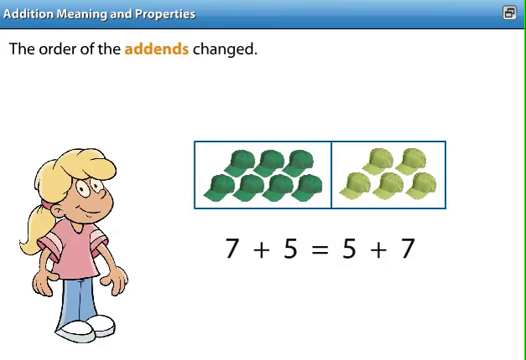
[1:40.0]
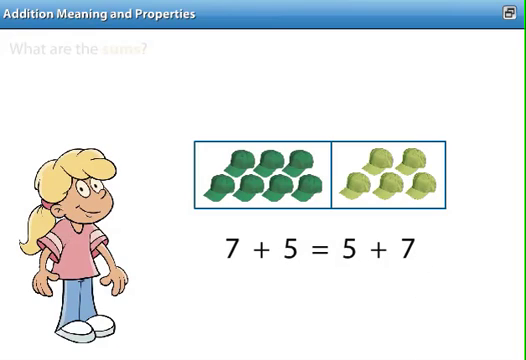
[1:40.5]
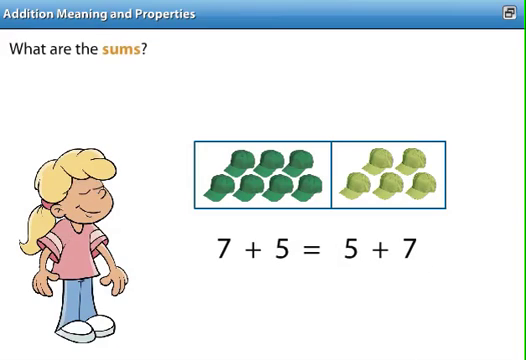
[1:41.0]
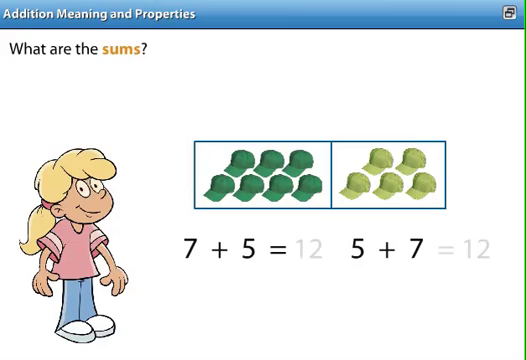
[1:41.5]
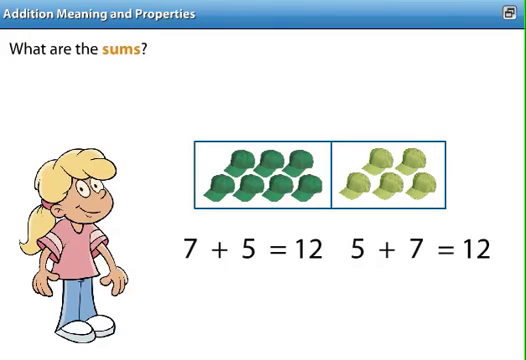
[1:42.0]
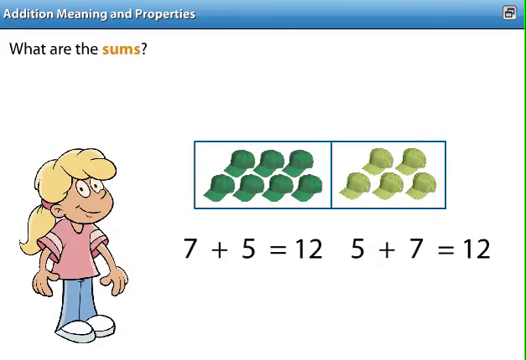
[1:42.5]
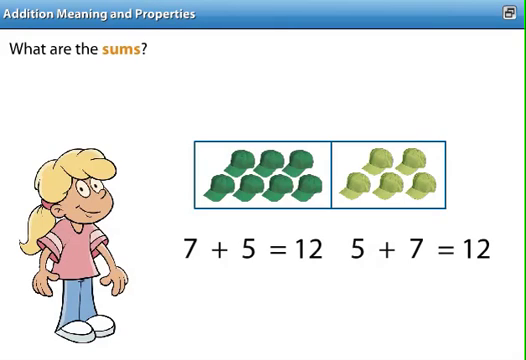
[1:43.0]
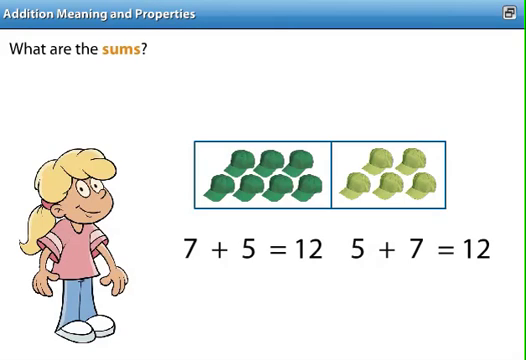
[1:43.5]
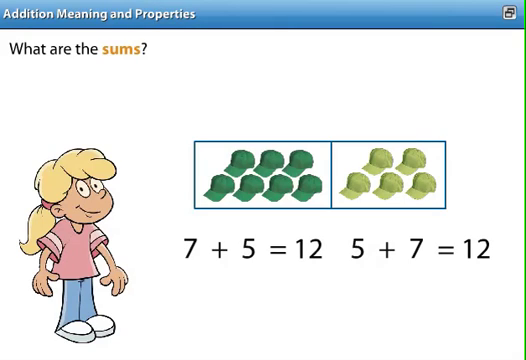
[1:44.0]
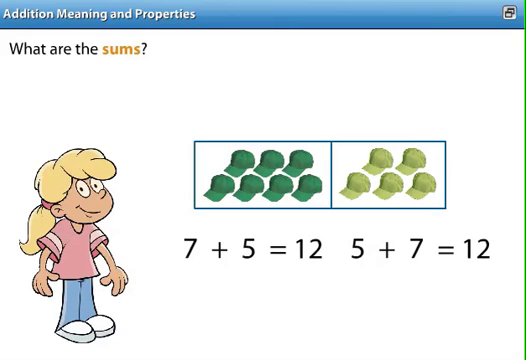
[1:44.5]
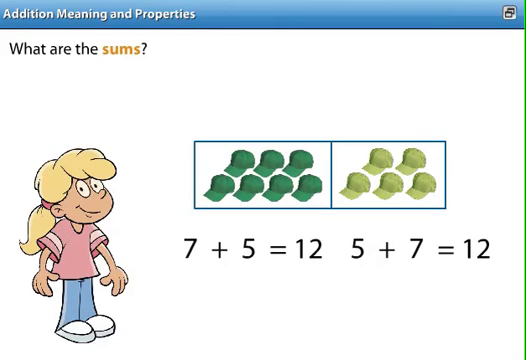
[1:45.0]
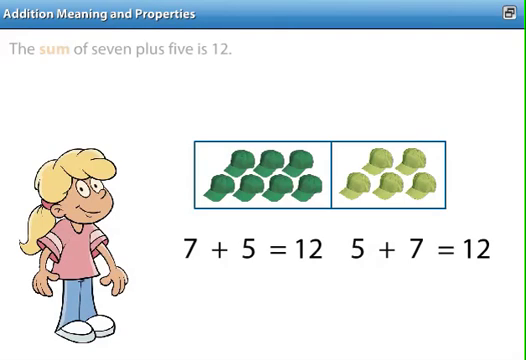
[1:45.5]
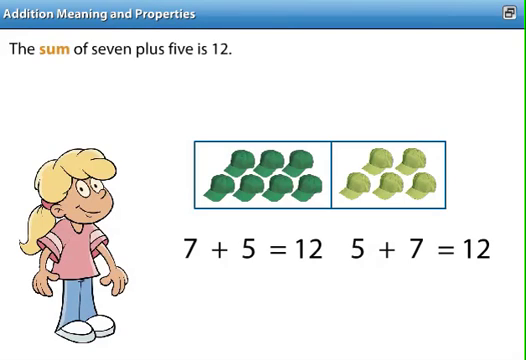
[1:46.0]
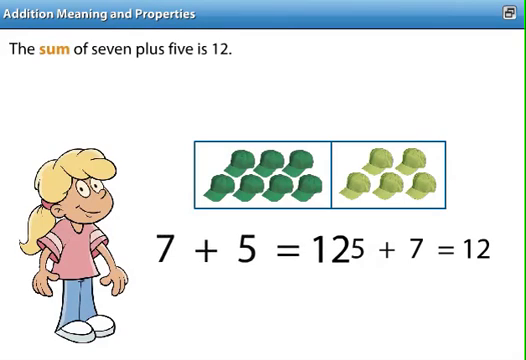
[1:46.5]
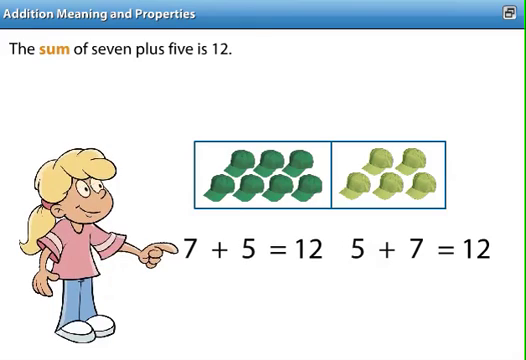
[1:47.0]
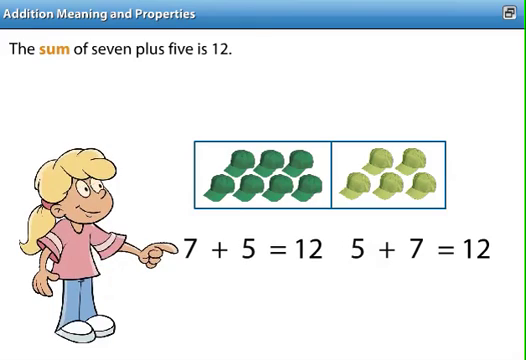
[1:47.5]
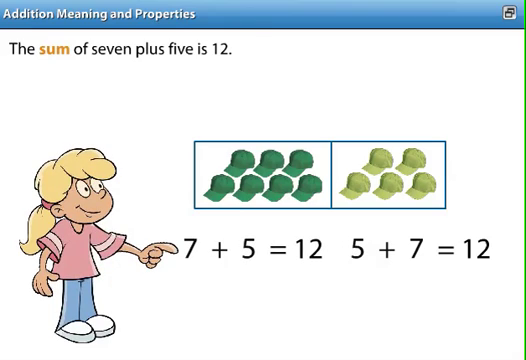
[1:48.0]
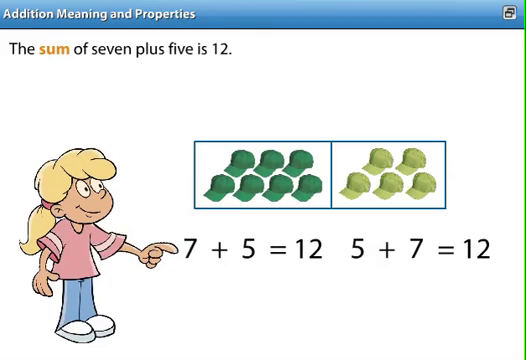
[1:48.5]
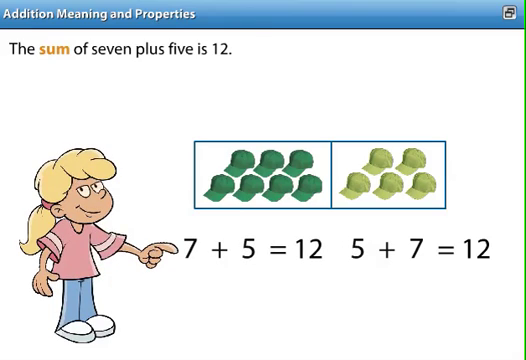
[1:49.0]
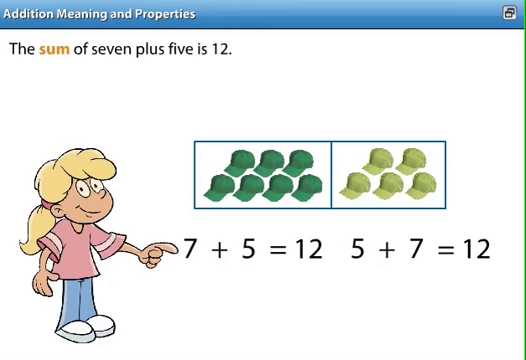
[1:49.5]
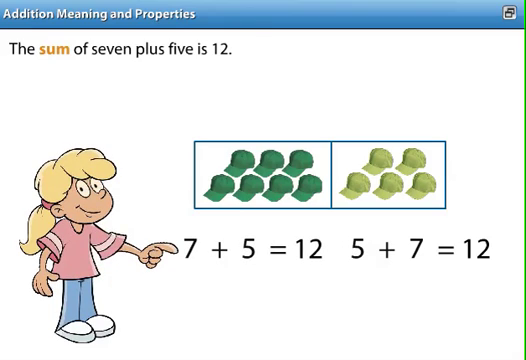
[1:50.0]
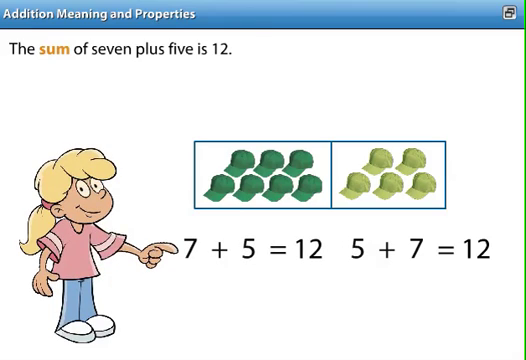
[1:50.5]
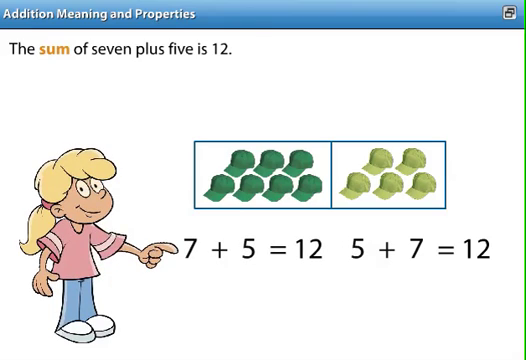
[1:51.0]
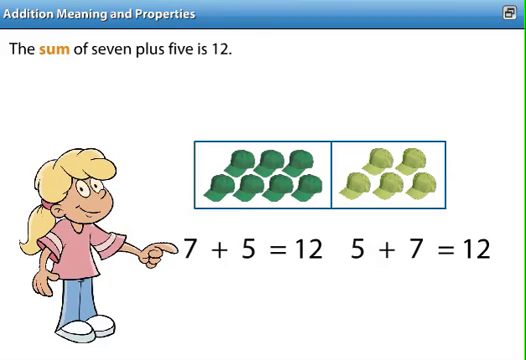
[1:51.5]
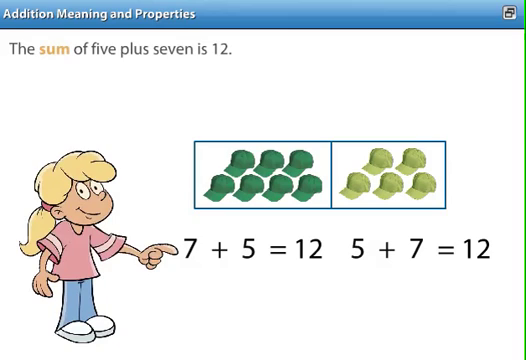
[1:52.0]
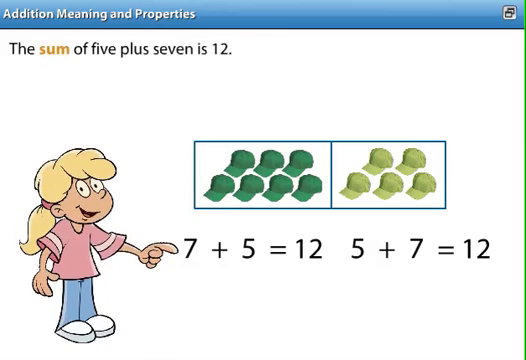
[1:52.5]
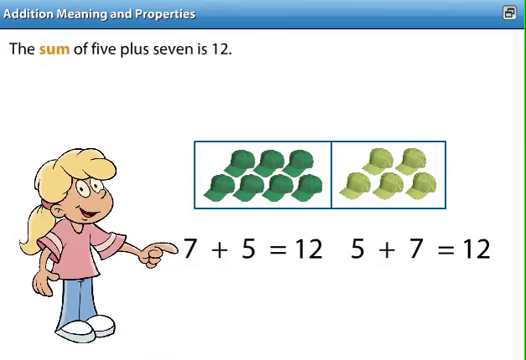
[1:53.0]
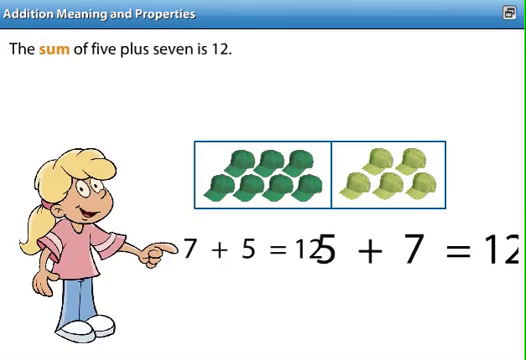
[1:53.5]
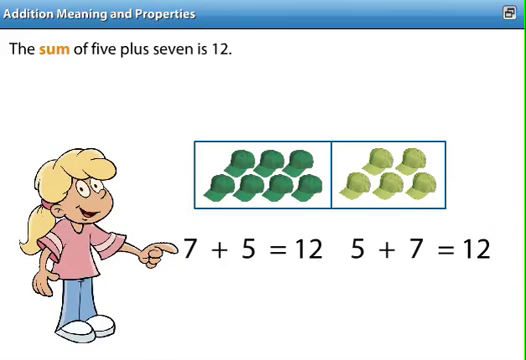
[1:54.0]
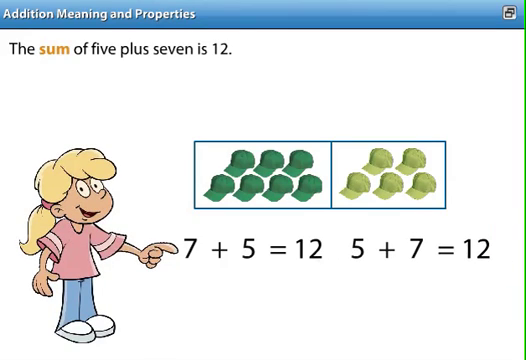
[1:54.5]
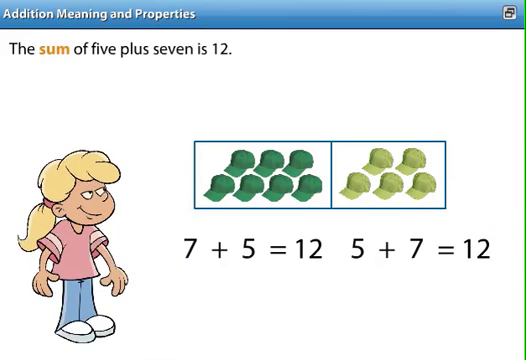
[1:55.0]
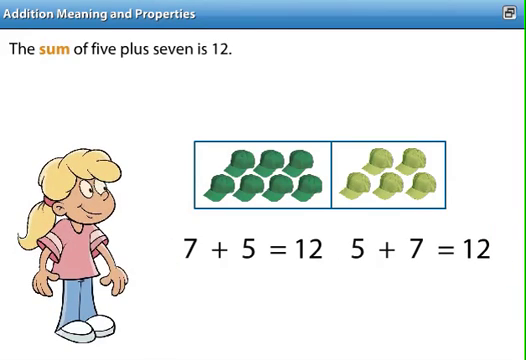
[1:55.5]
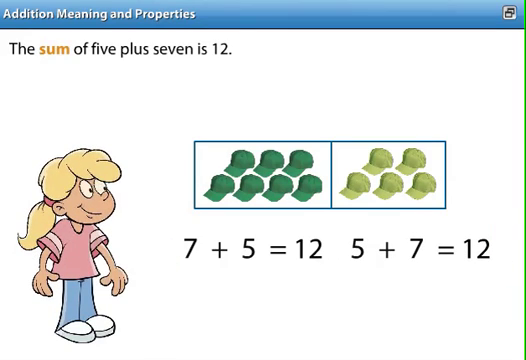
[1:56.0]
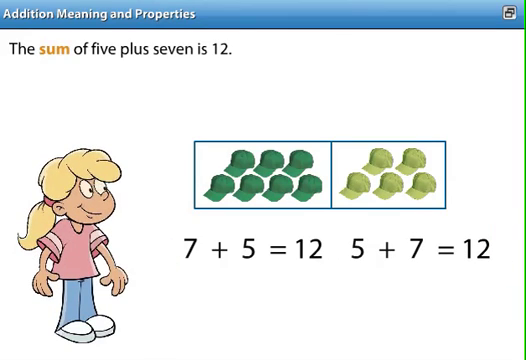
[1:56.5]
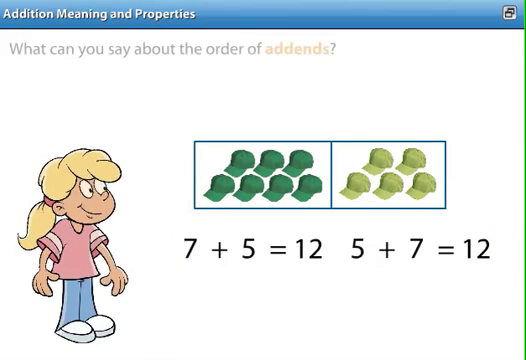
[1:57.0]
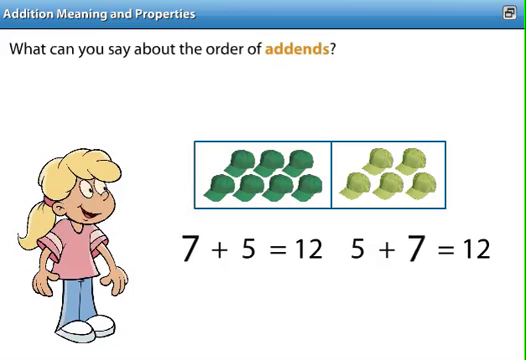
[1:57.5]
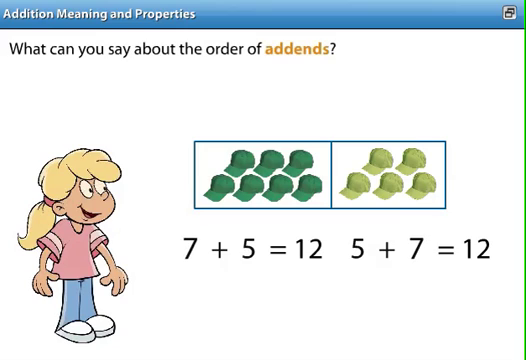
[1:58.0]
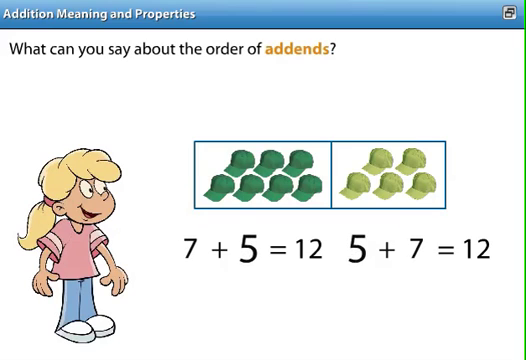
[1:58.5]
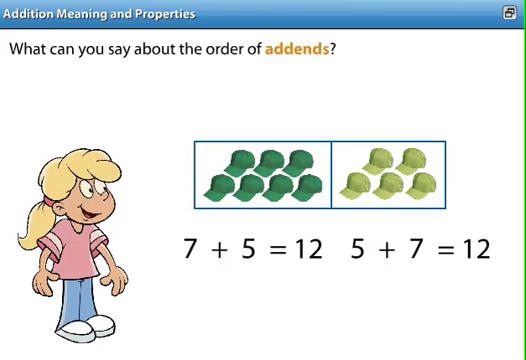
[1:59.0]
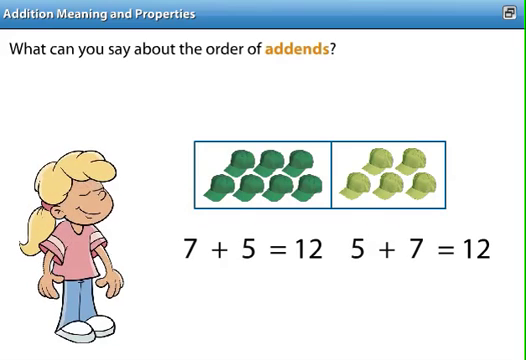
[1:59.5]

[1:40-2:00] The question at the top asks "what are the sums?" and the equation 7 + 5 = 5 + 7 beneath the rectangle of hats separates into two equations in the same place: "7 + 5 = 12" and "5 + 7 = 12." The cartoon character points with her finger to the first equation, 7 + 5 = 12, as it pops out and back into place. The top text changes again to a sentence ending "is 12," after which the 5 + 7 = 12 section pops out and back into place. The top then reads "what can you say about the order of addends?" and the numbers pop out and settle back into place, while the cartoon character puts her hand on her chin as if thinking critically.